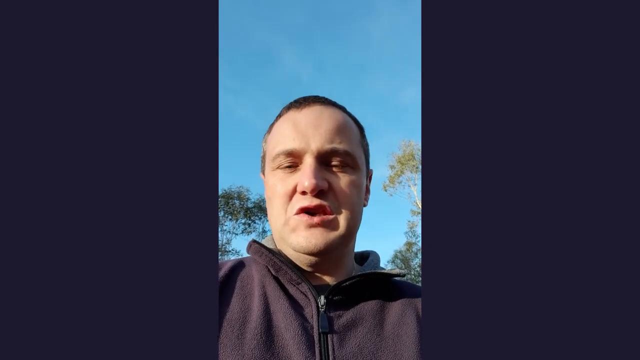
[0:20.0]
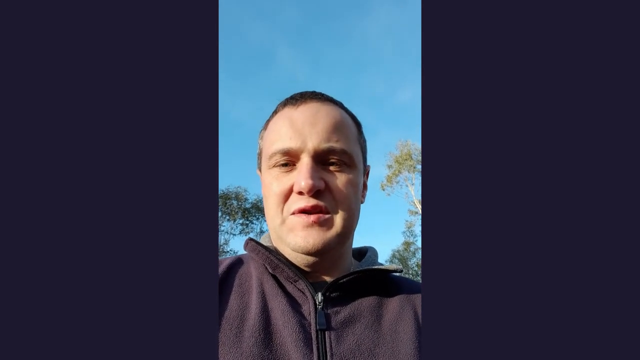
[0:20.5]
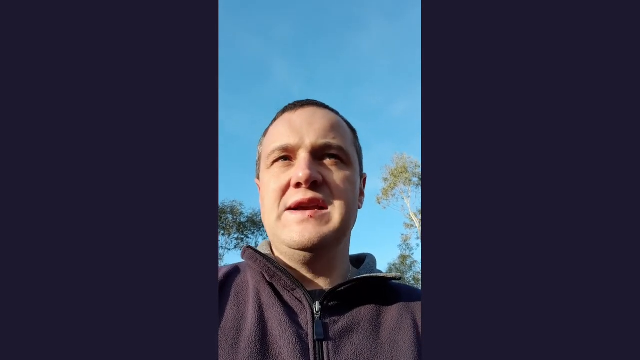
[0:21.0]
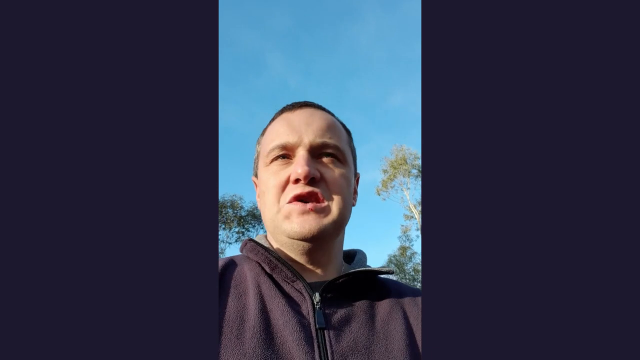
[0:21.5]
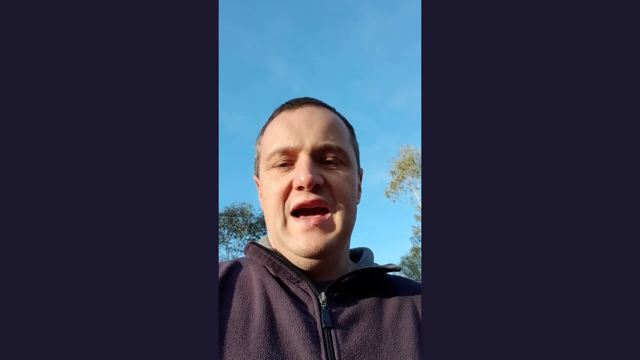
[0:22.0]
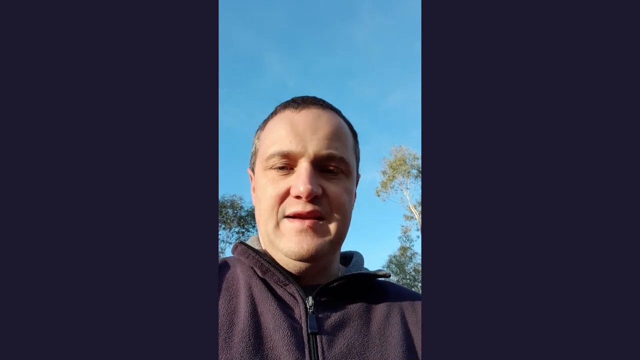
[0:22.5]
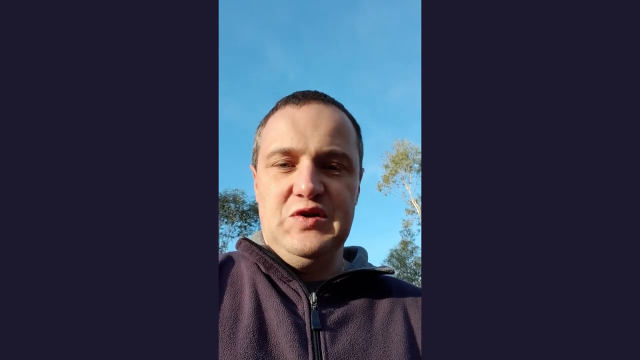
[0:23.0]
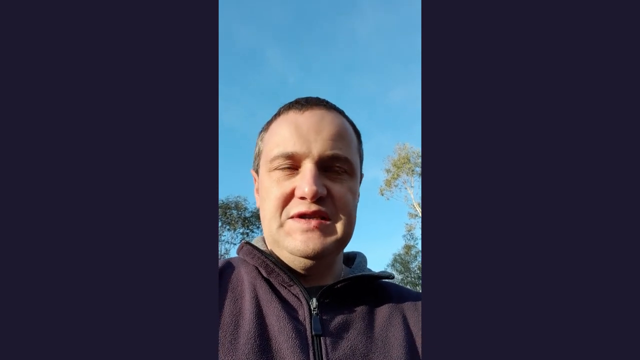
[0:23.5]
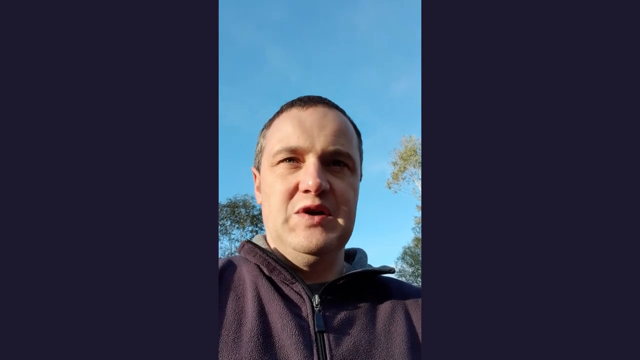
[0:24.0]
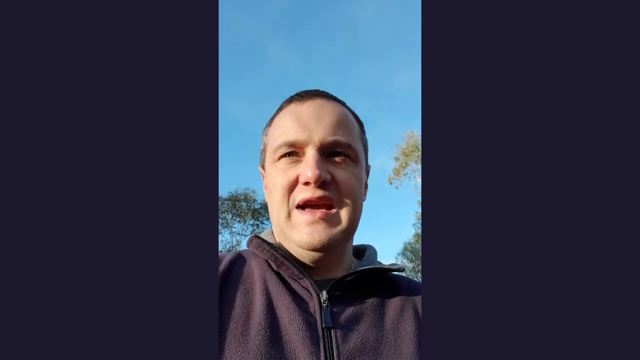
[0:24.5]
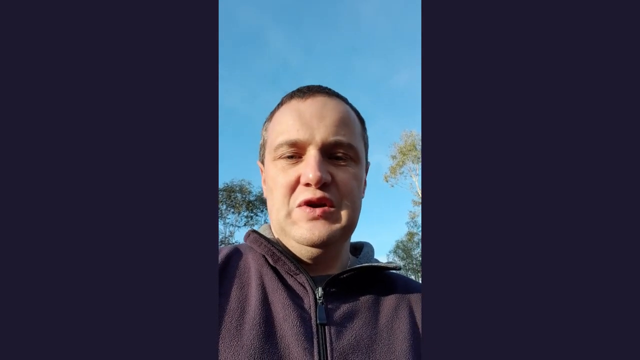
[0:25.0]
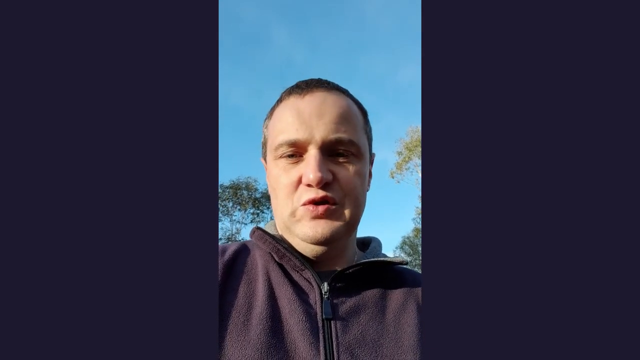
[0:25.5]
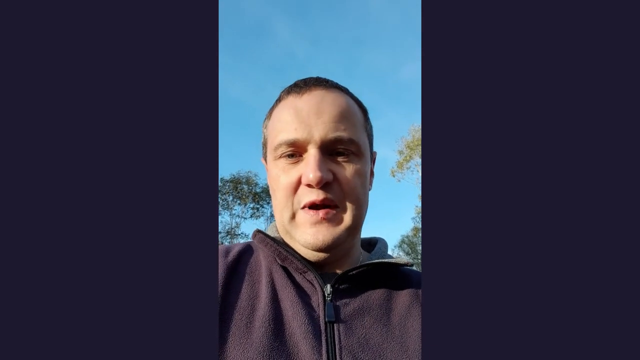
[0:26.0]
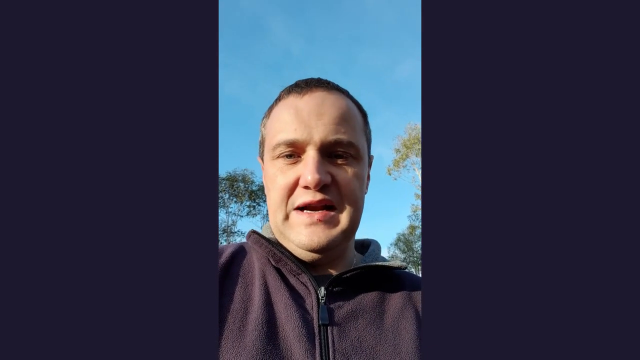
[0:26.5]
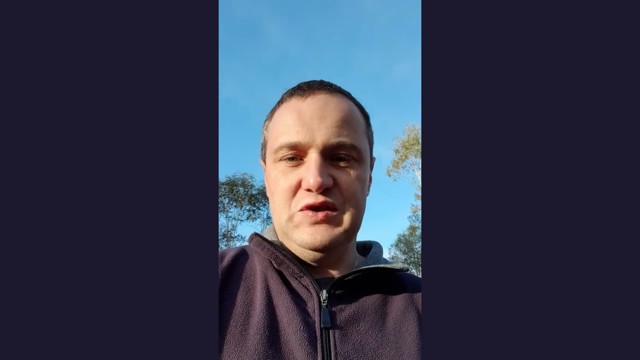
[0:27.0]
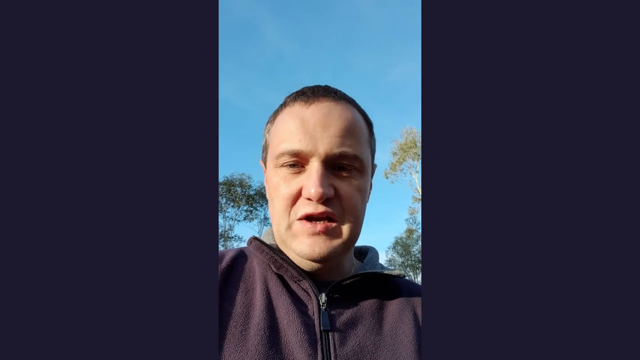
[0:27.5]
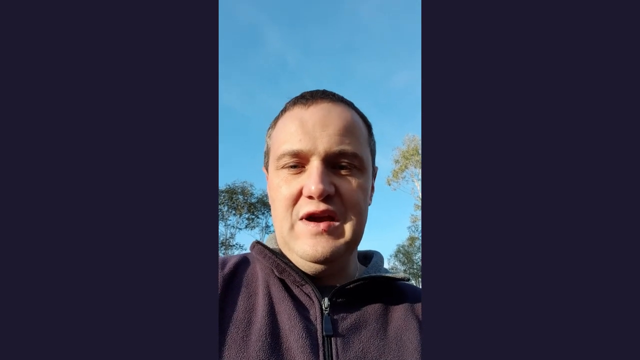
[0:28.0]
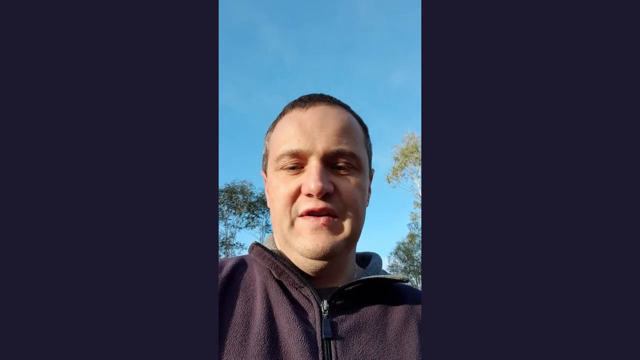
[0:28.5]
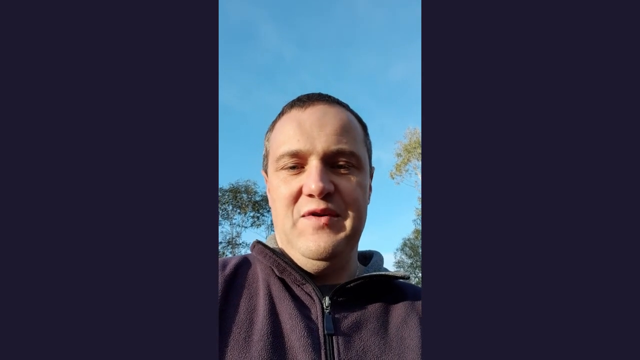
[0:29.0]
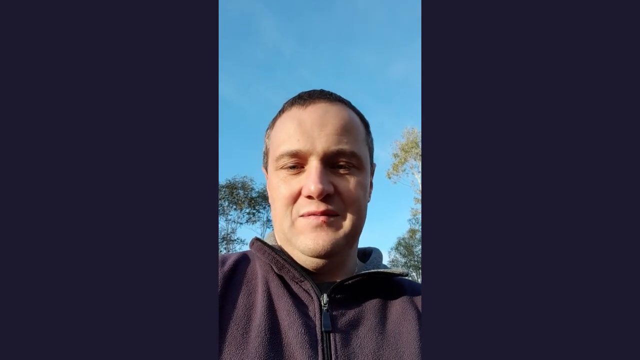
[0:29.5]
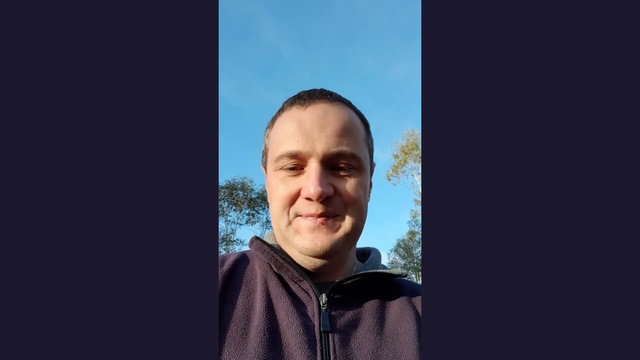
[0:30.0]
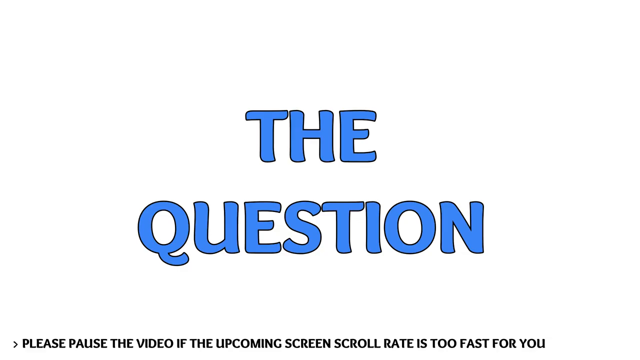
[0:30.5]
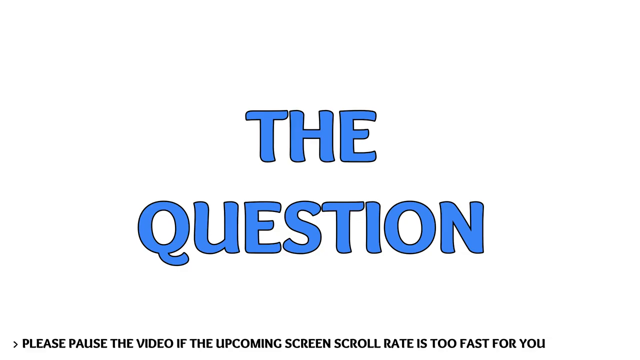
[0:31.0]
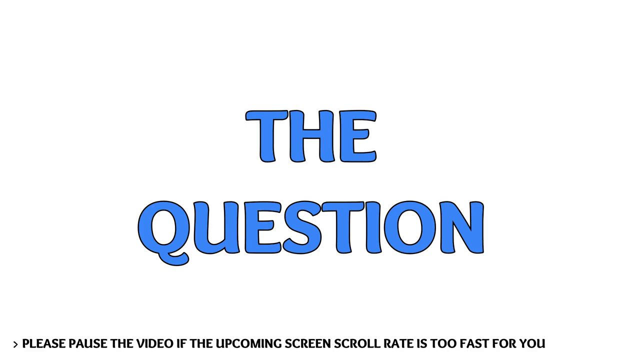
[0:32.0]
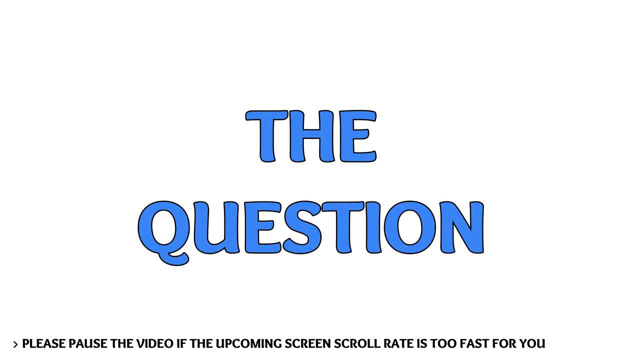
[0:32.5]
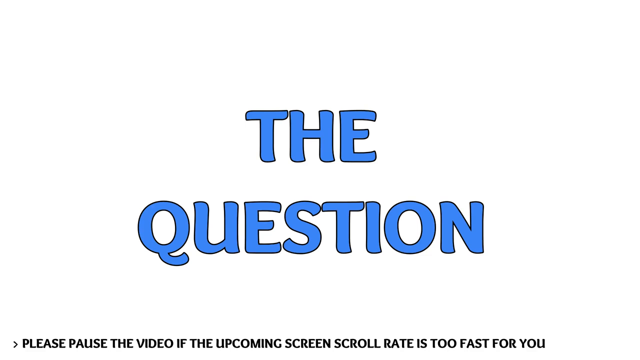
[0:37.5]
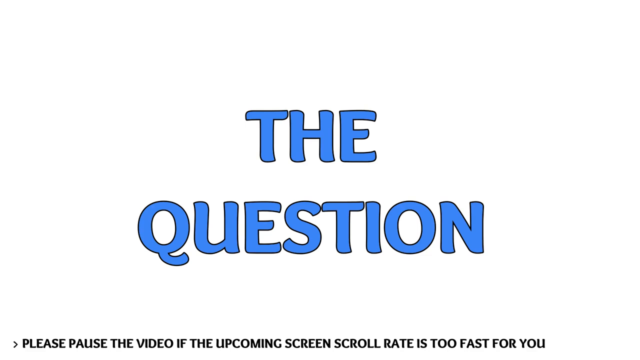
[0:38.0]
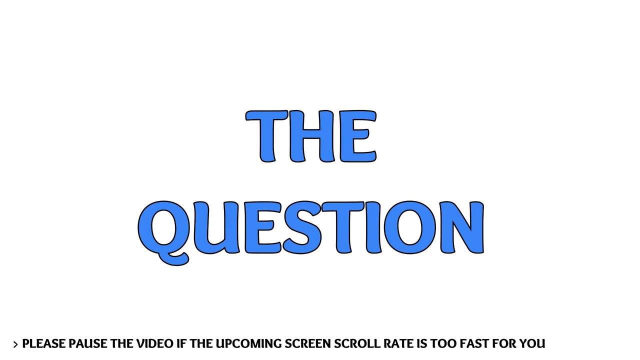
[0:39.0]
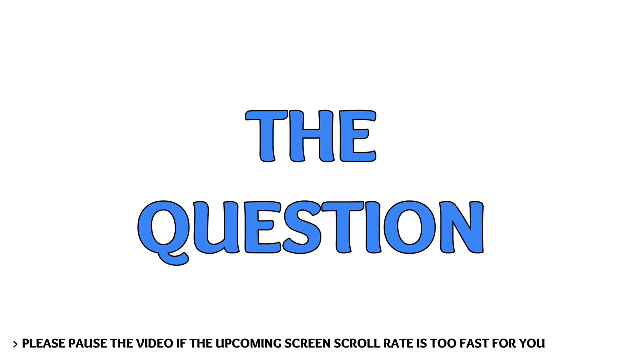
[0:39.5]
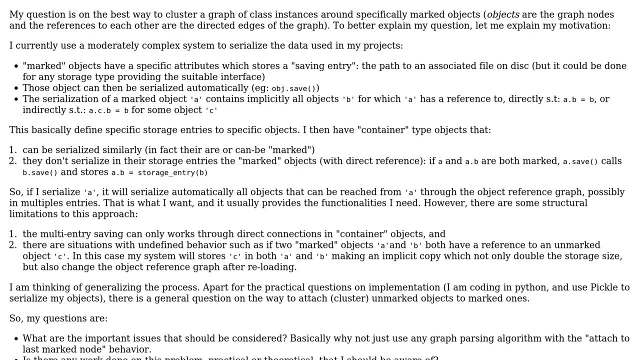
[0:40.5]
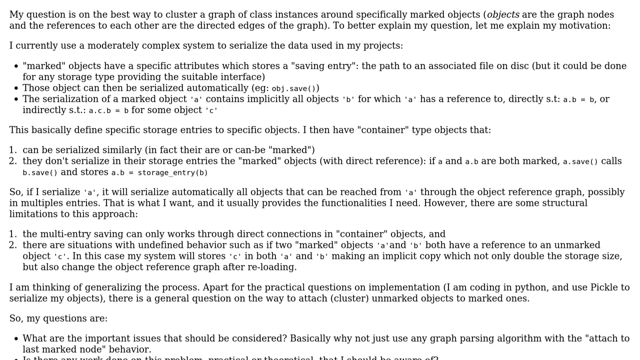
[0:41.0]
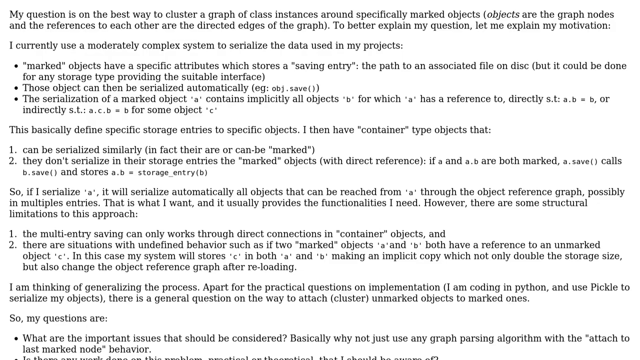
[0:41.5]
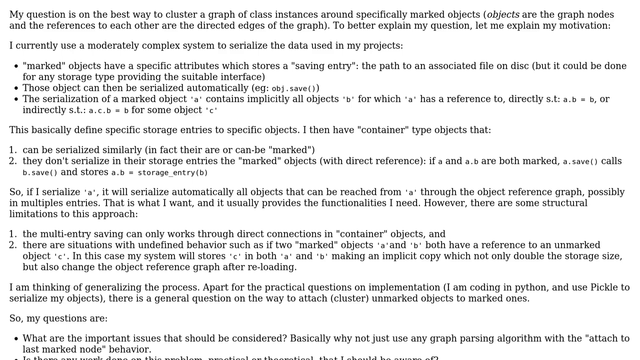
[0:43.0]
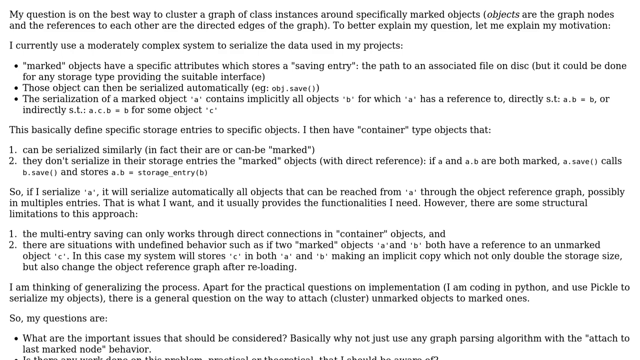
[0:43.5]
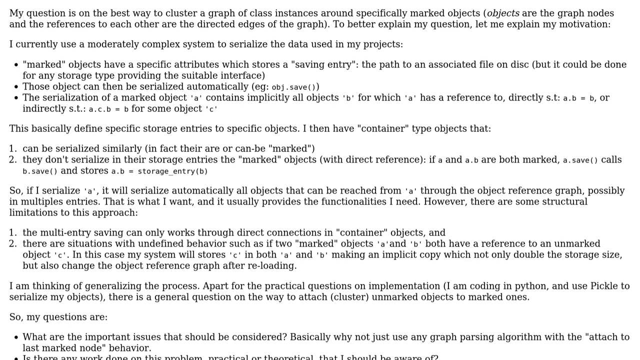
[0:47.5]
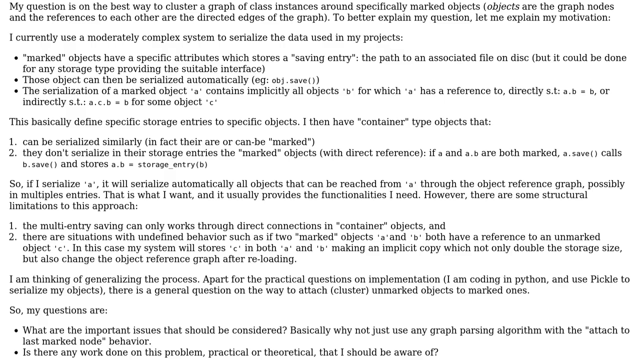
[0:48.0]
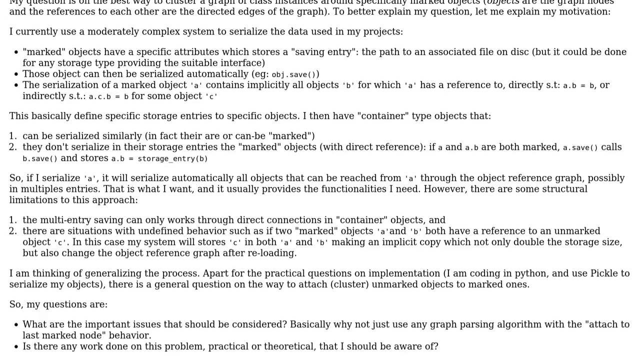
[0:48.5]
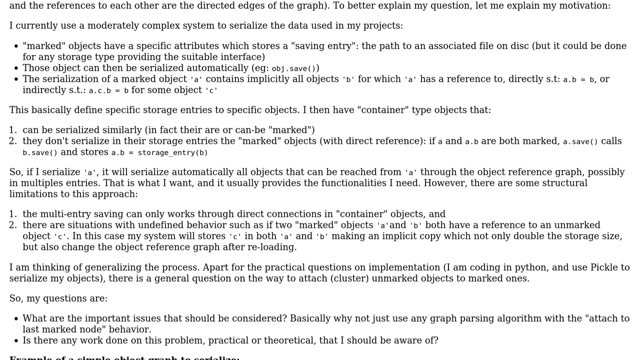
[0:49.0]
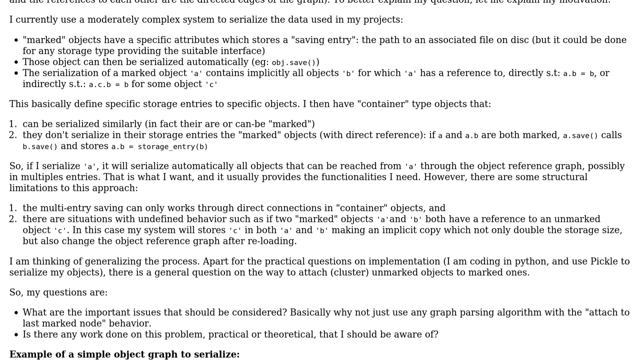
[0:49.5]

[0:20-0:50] The man continues talking directly to the camera without changing position, with the black bars still on either side and the blue sky behind him. The scene then changes to a white background with the words "the question," written in blue capital letters with black edging, which stays on screen for a couple of seconds. Next comes a screen full of text about the best way to cluster a graph; it starts as a still shot and then begins scrolling up slowly for a couple of seconds.